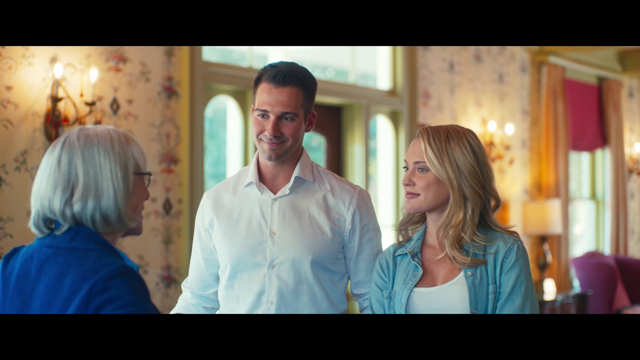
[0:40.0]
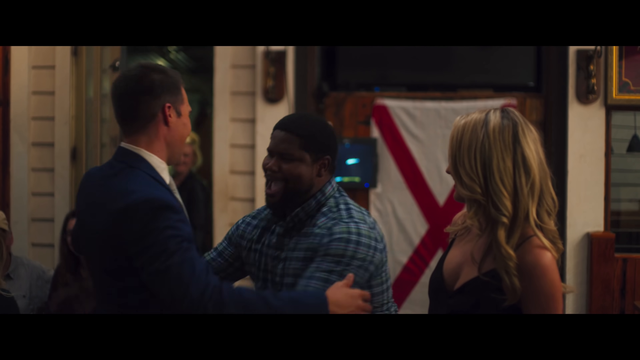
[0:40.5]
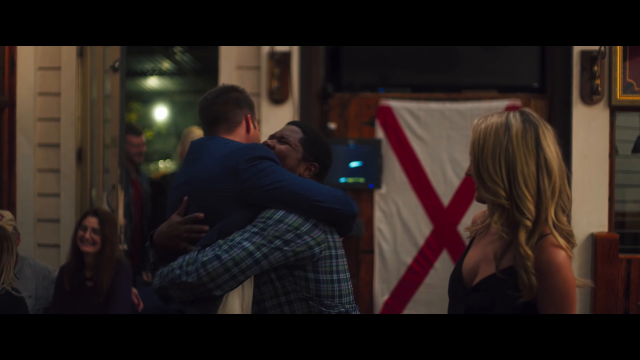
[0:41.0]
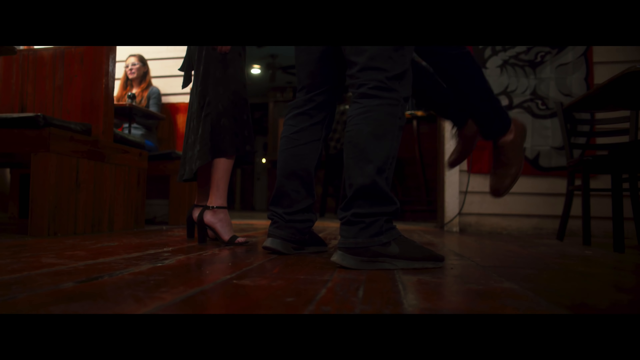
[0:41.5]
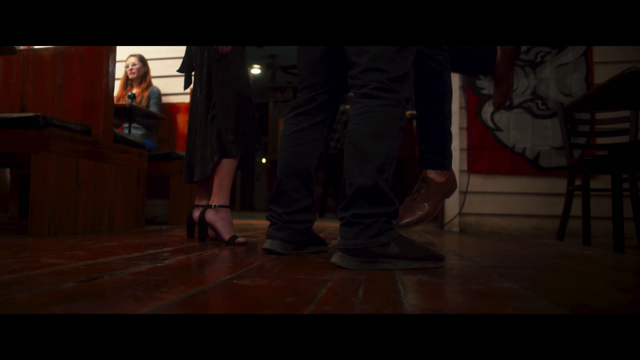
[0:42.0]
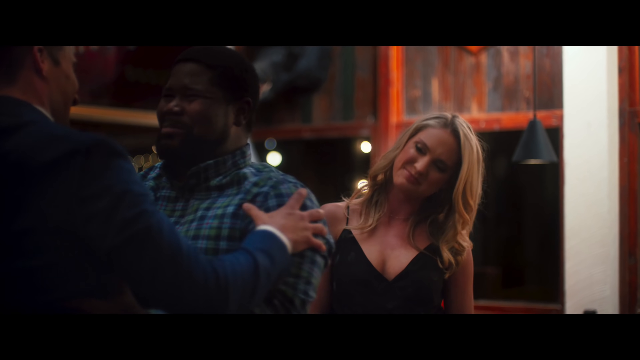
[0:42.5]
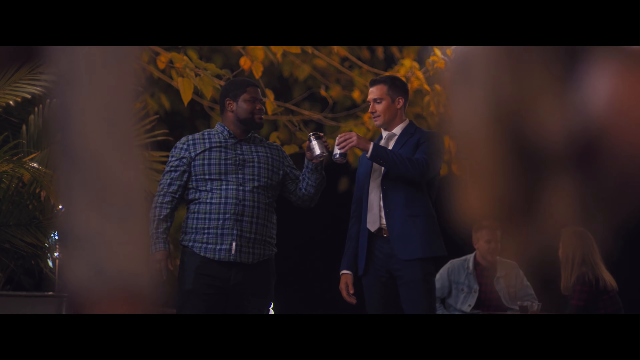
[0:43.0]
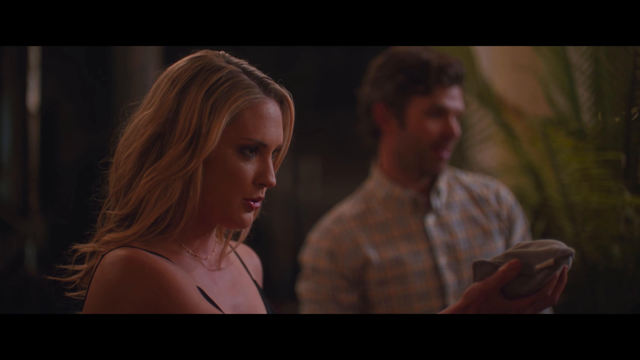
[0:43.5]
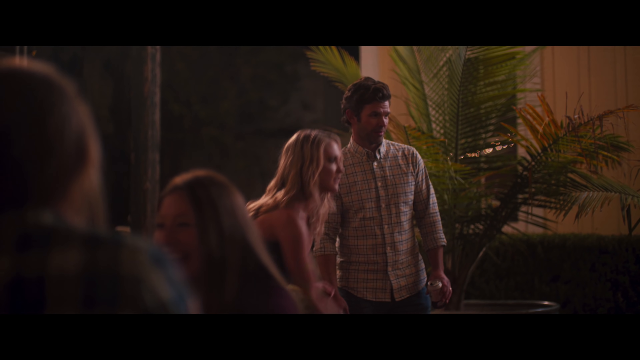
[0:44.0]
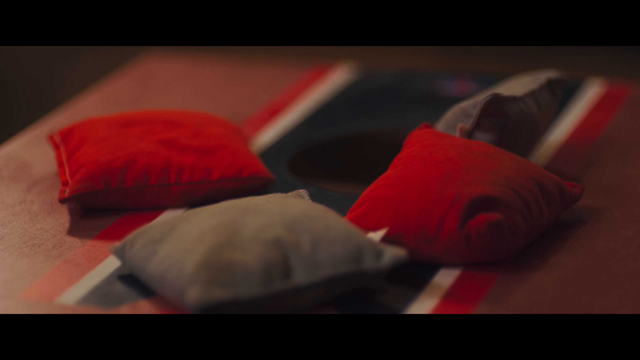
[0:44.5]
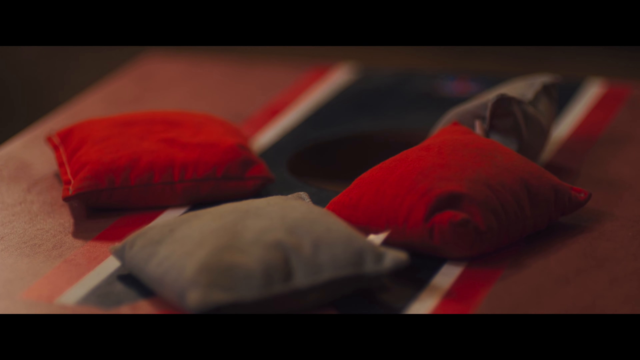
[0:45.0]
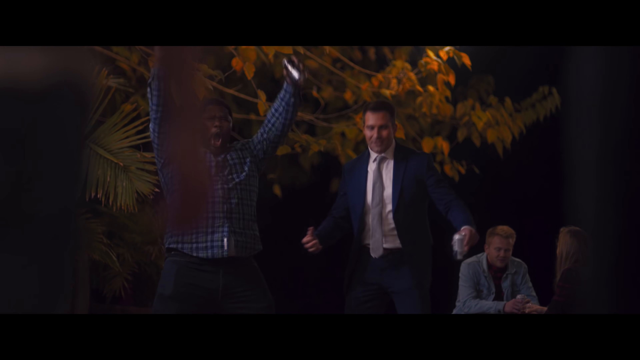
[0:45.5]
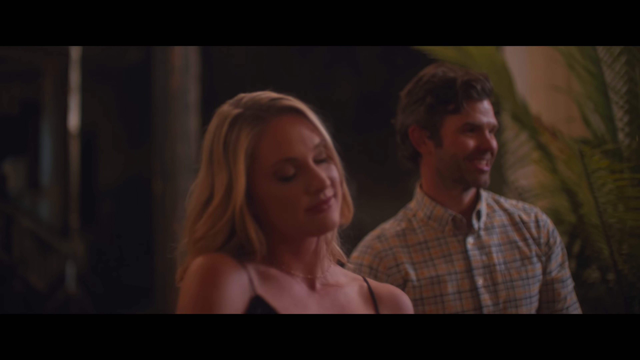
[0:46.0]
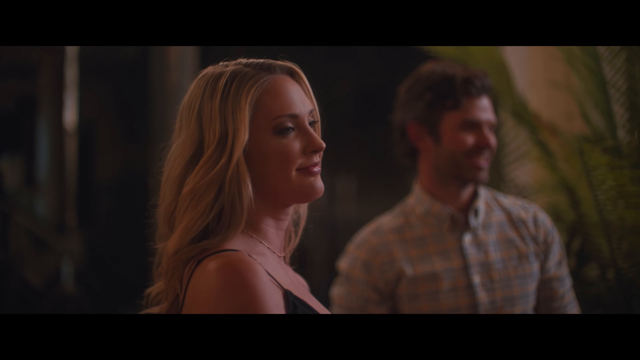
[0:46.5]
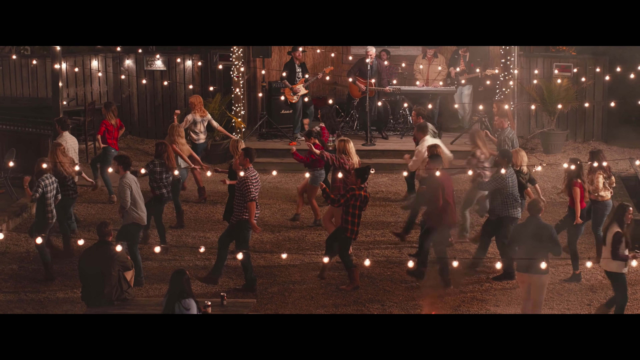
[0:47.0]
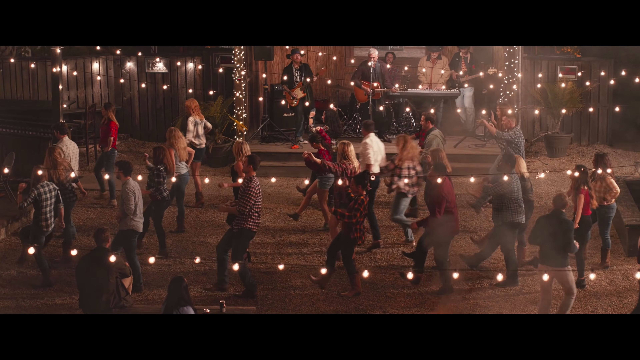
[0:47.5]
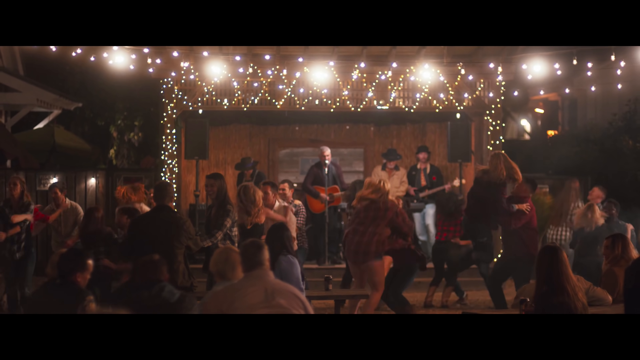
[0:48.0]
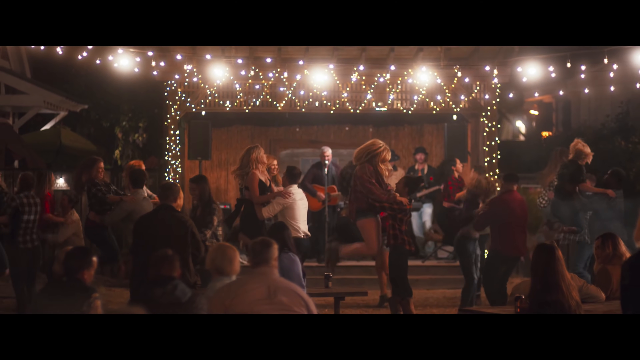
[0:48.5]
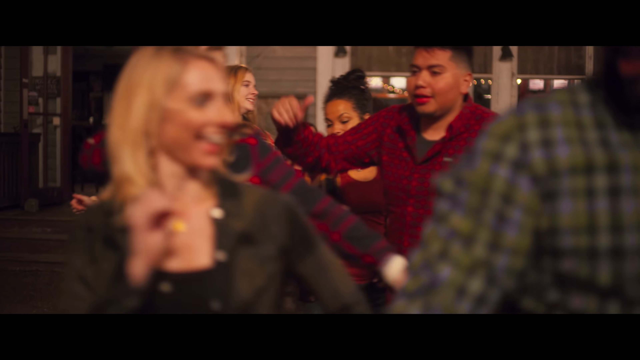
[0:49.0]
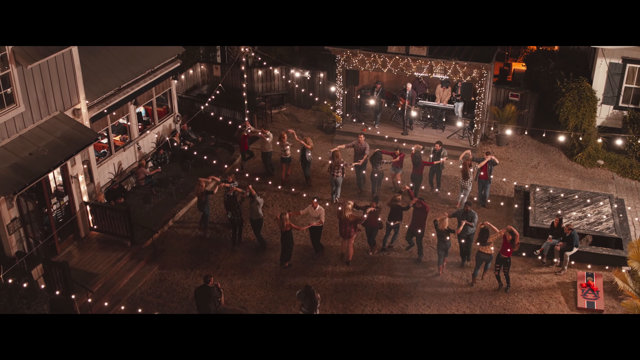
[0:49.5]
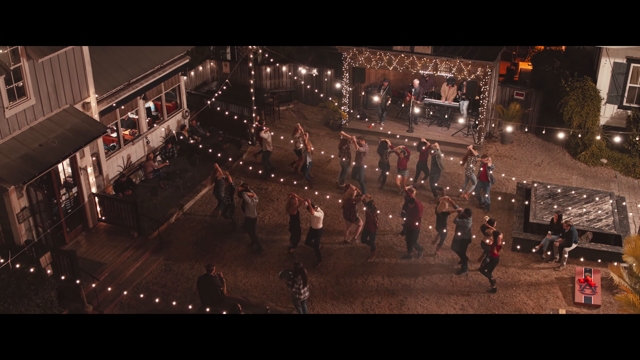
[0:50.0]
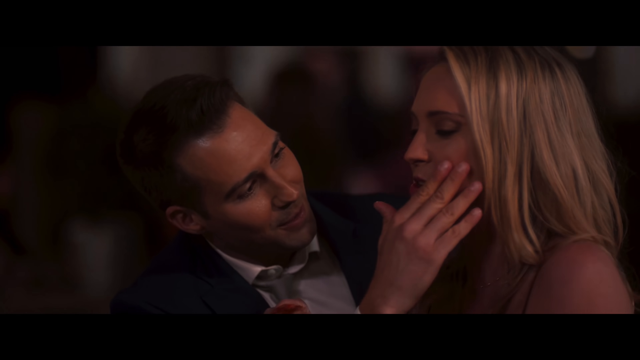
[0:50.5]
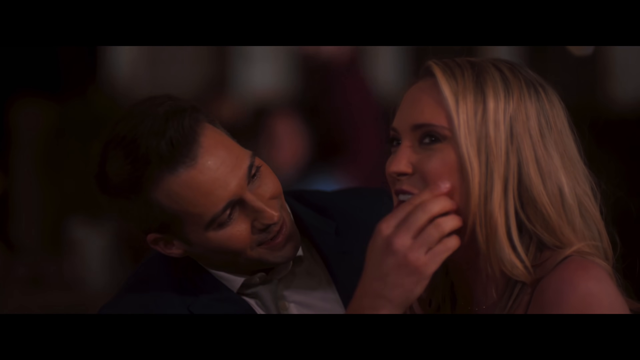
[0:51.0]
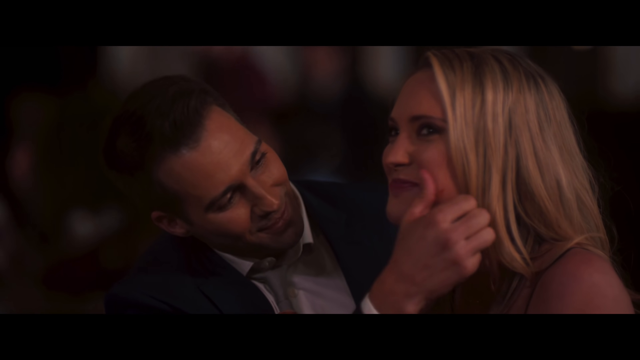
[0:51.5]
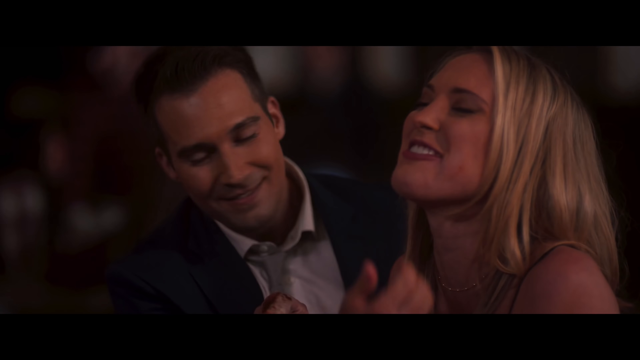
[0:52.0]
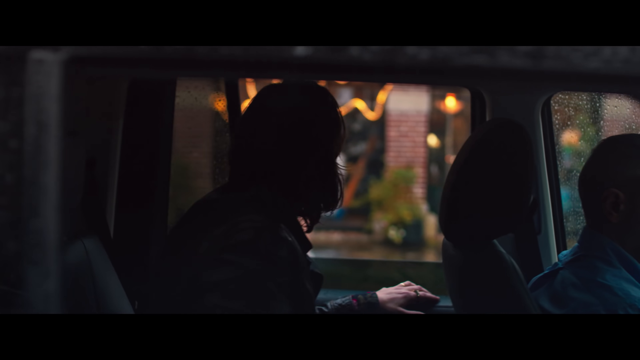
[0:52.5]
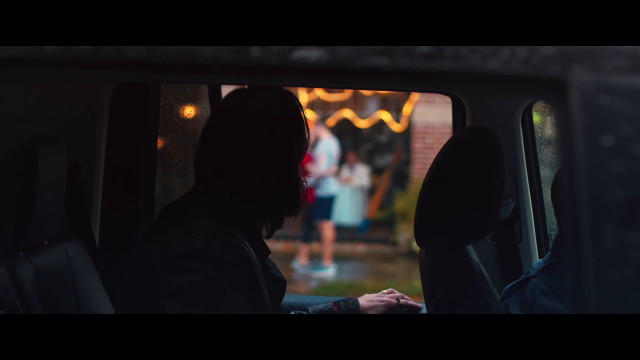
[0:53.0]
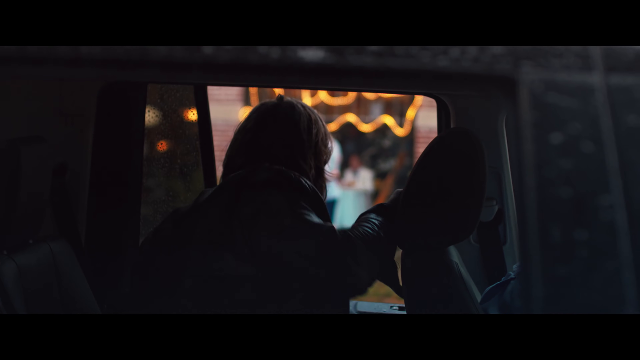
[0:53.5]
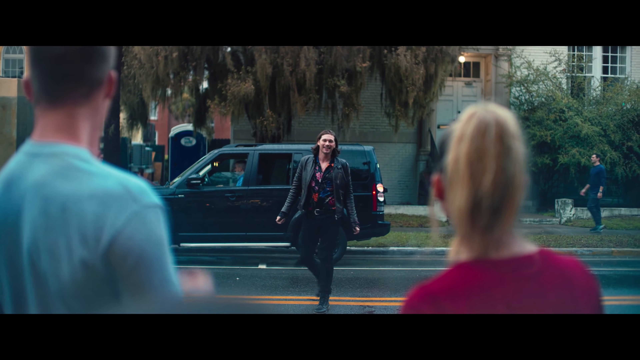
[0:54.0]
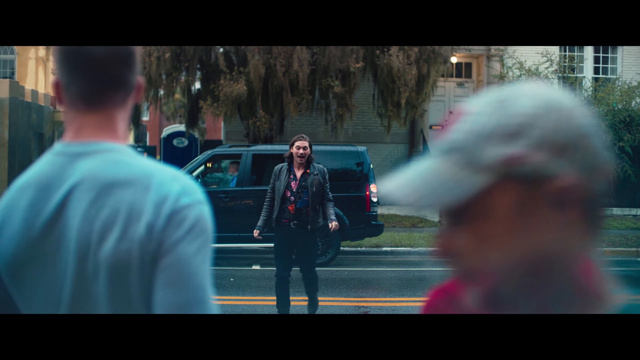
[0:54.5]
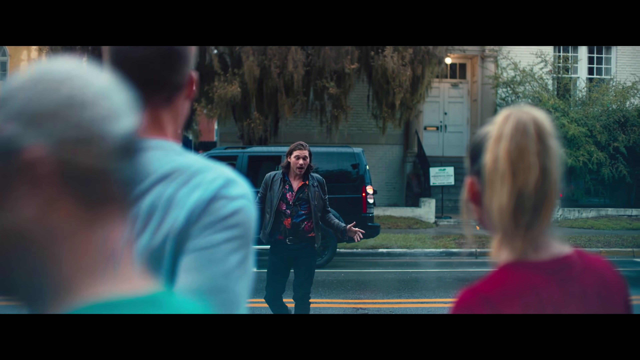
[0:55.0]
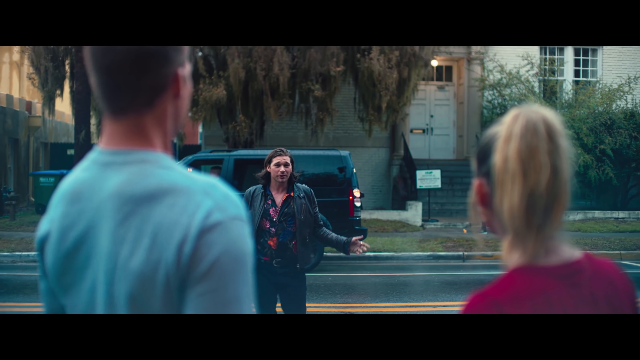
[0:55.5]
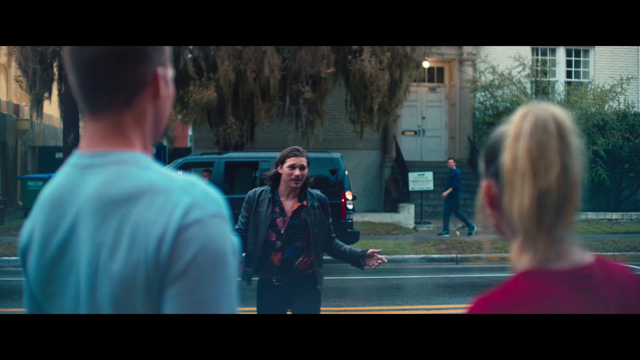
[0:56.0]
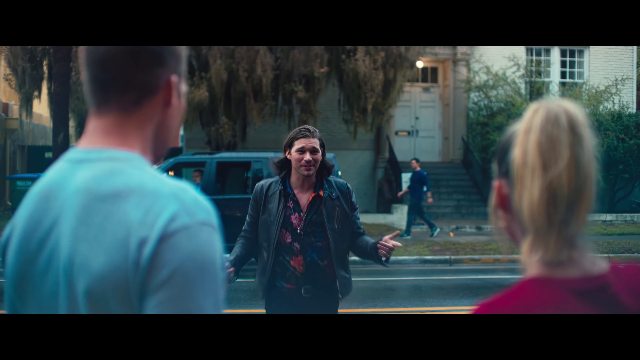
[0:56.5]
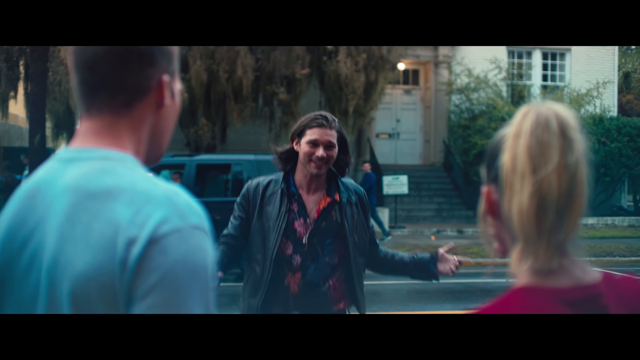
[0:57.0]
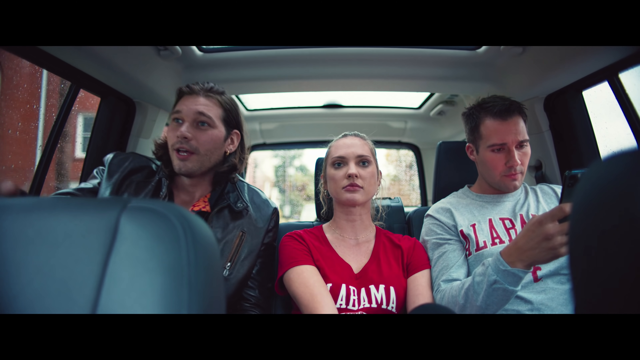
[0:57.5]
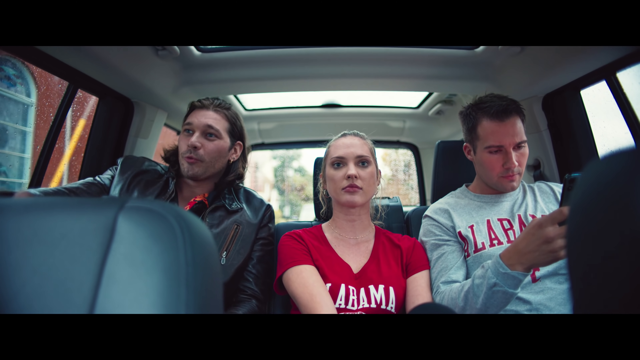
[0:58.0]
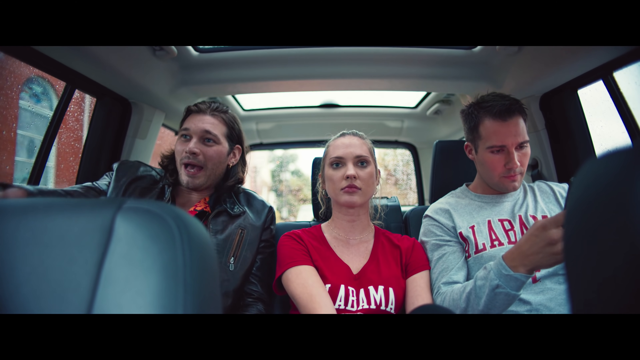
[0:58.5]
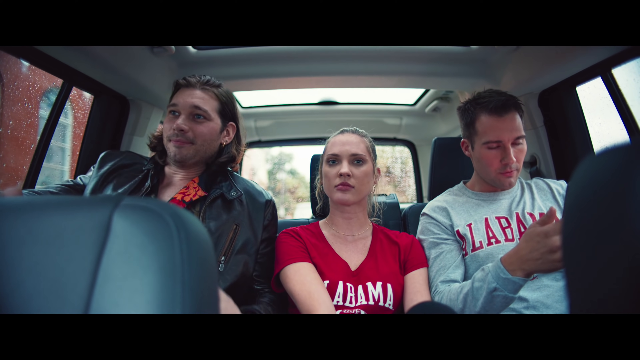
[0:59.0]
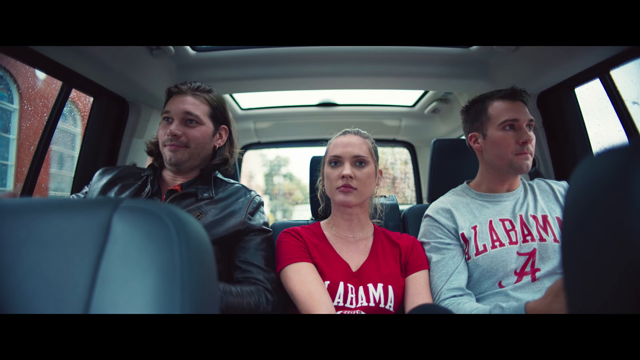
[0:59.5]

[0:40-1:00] The man and woman continue their conversation, both wearing earpods and talking to each other on a call; the man looks stunned and surprised about who the woman is talking to. They are then on a flight that lands in Alabama. They see a huge red and white van and take it to drive to a house, where an old woman with whitish hair, glasses and a dark blue coat welcomes them. The couple looks happy. The woman is wearing a white denim coat with a white crop top underneath, and the man is wearing only a shirt.